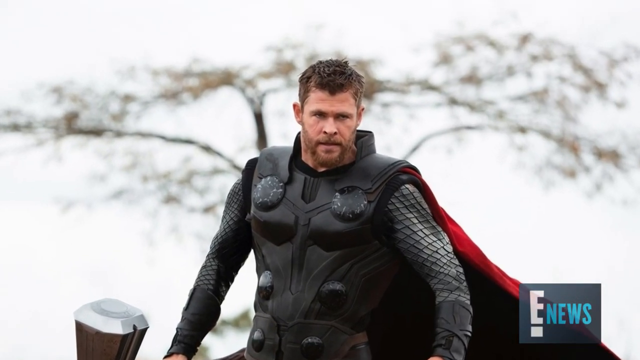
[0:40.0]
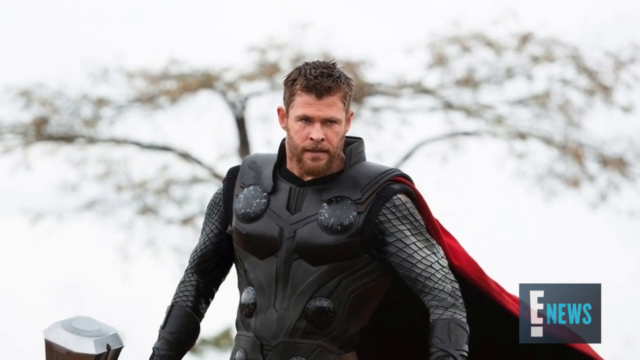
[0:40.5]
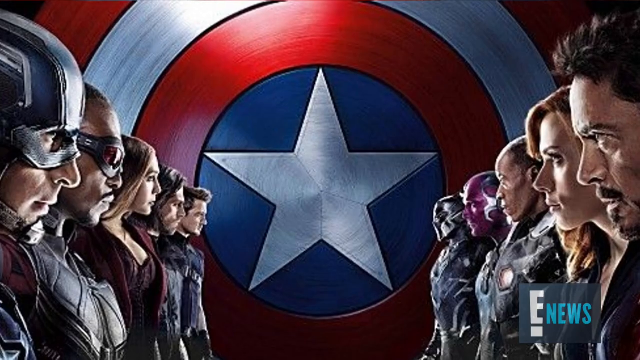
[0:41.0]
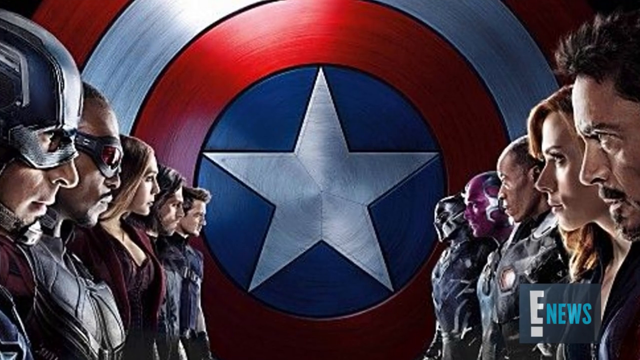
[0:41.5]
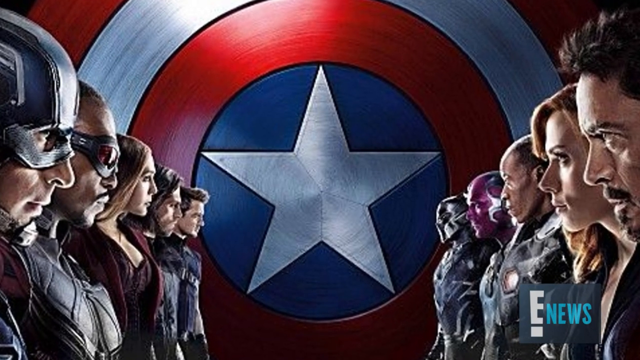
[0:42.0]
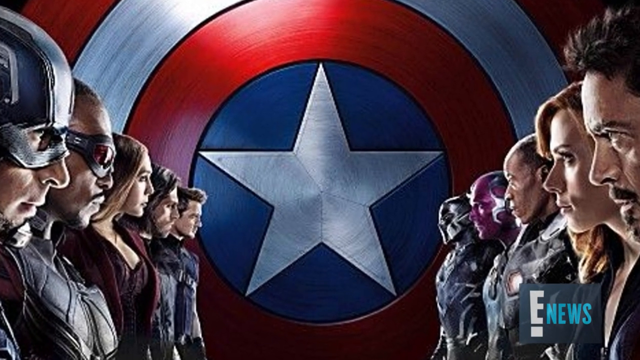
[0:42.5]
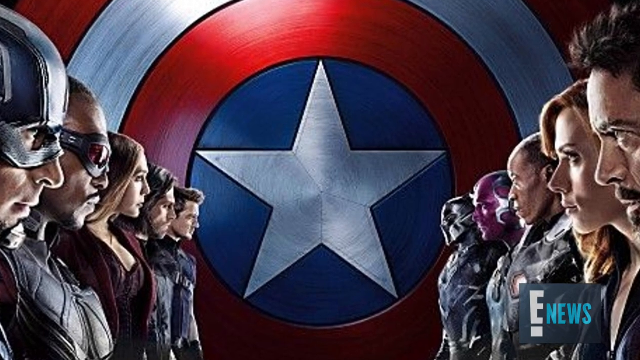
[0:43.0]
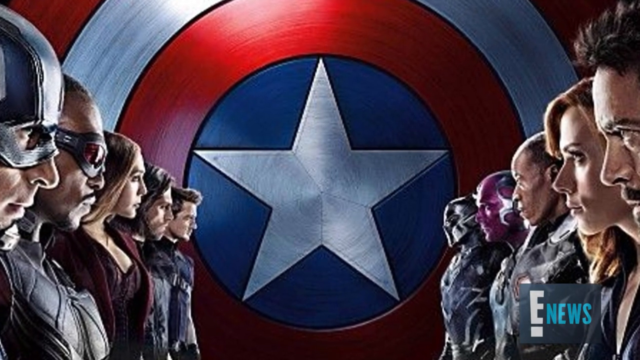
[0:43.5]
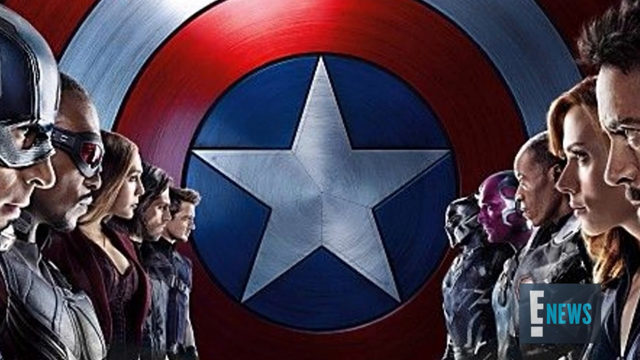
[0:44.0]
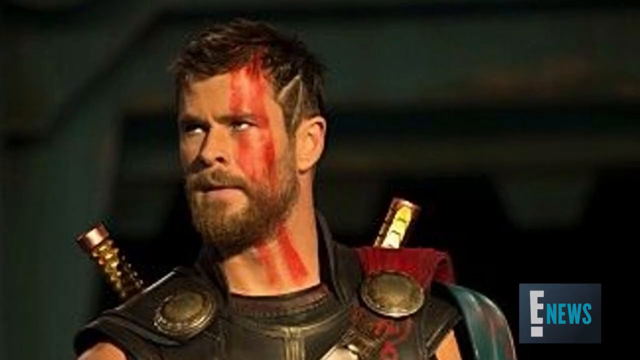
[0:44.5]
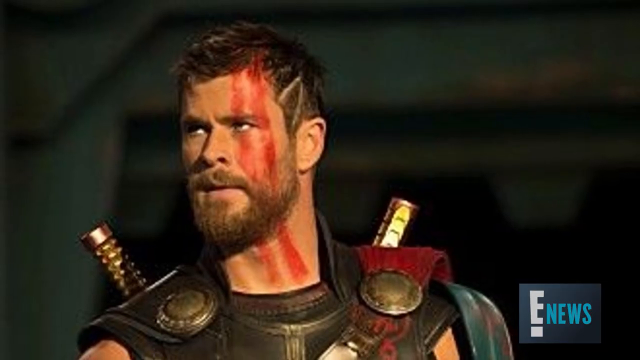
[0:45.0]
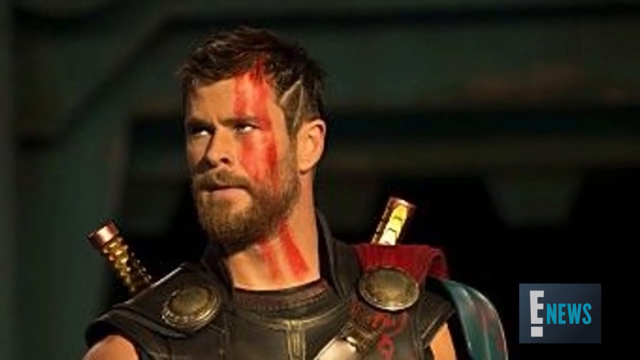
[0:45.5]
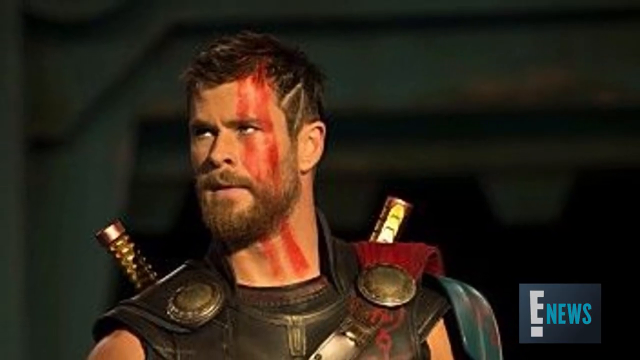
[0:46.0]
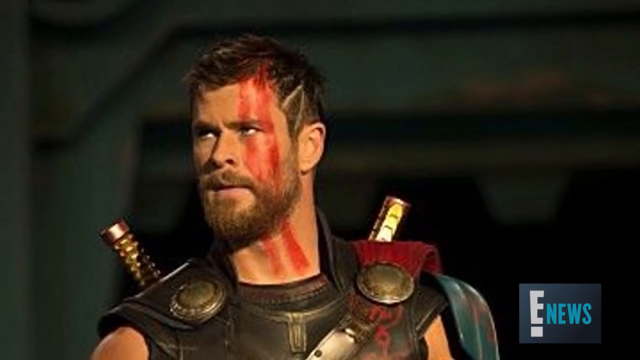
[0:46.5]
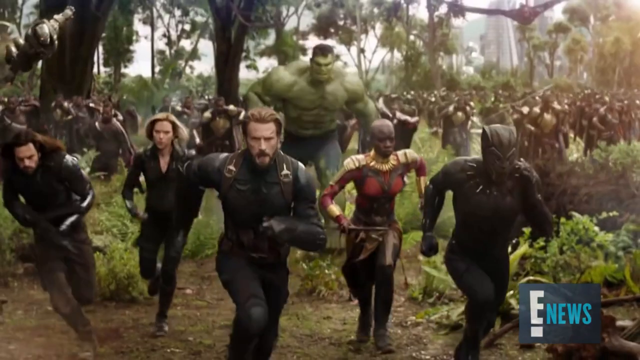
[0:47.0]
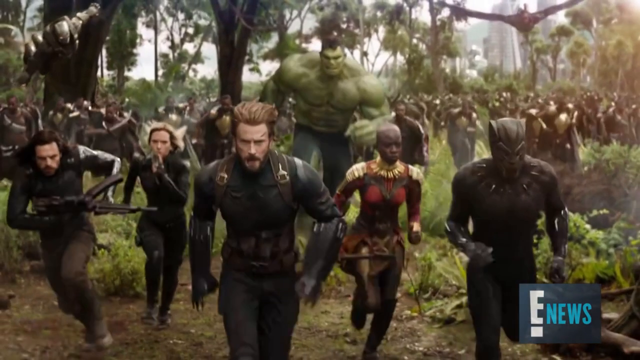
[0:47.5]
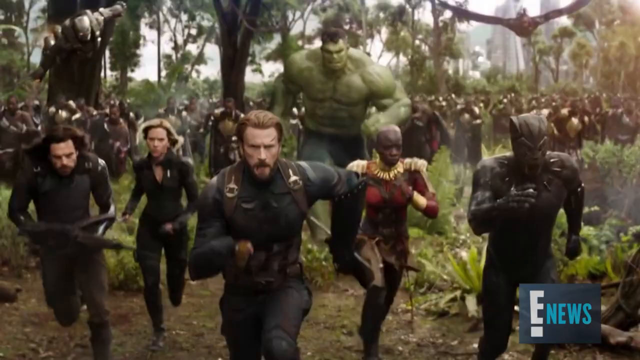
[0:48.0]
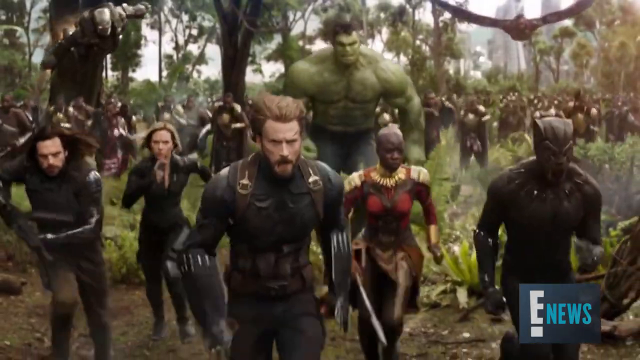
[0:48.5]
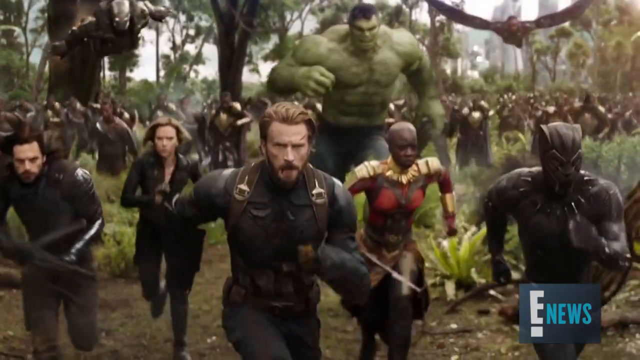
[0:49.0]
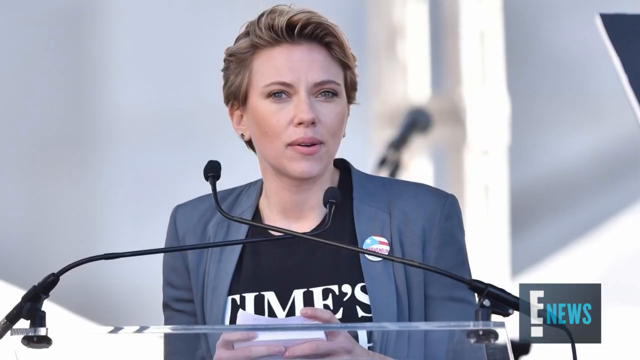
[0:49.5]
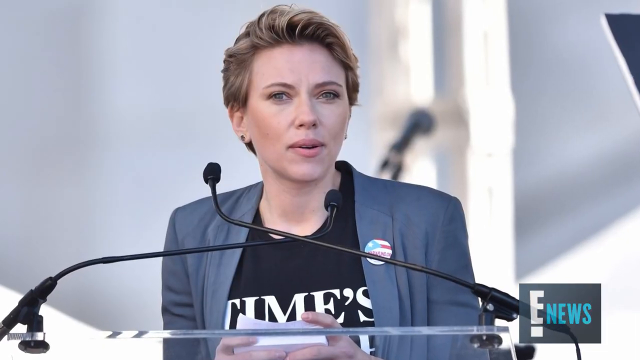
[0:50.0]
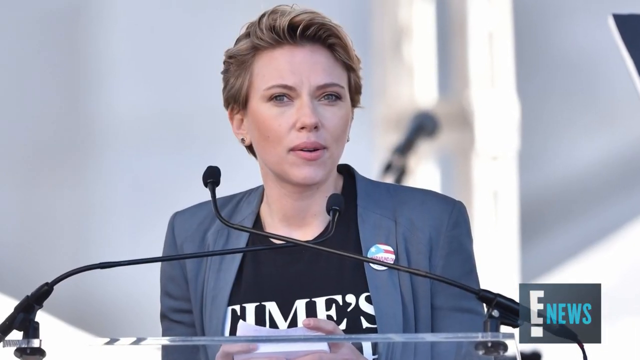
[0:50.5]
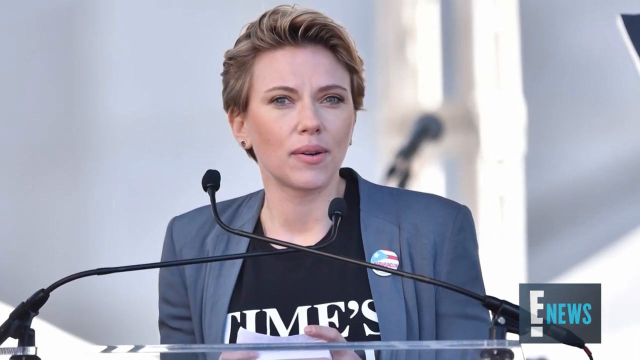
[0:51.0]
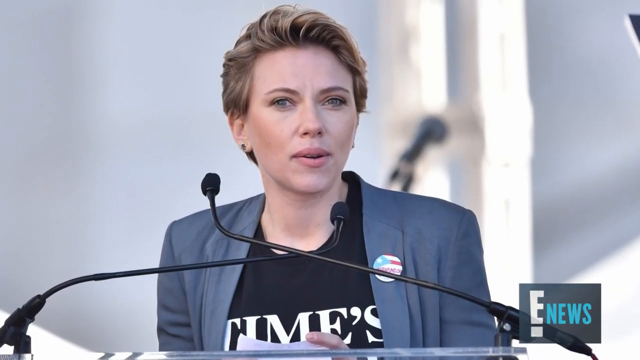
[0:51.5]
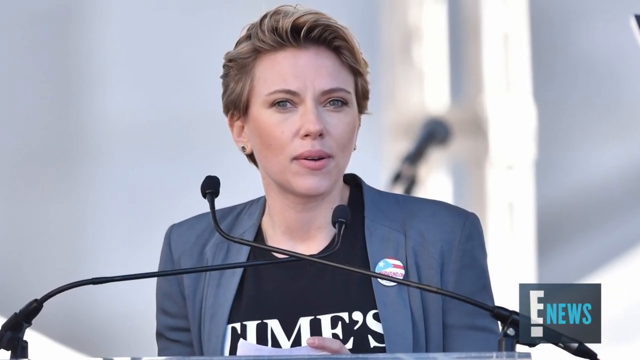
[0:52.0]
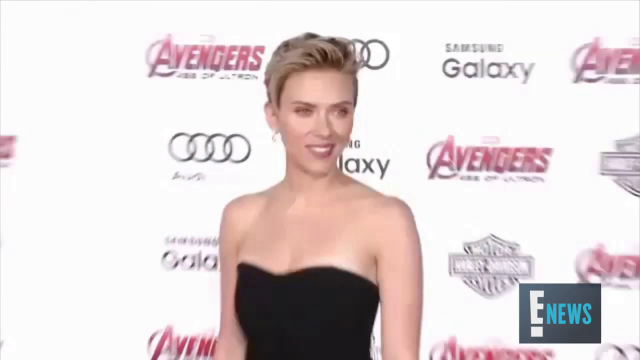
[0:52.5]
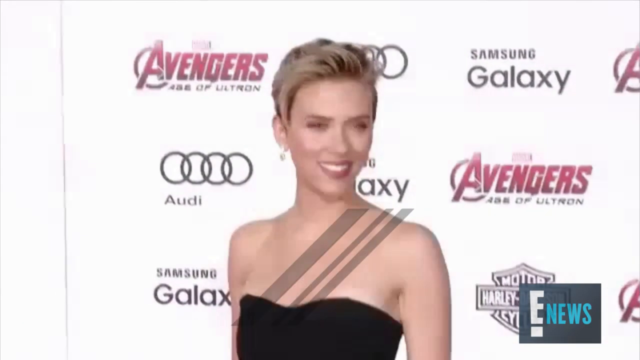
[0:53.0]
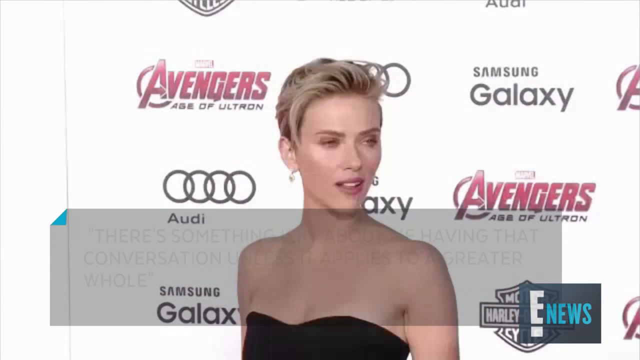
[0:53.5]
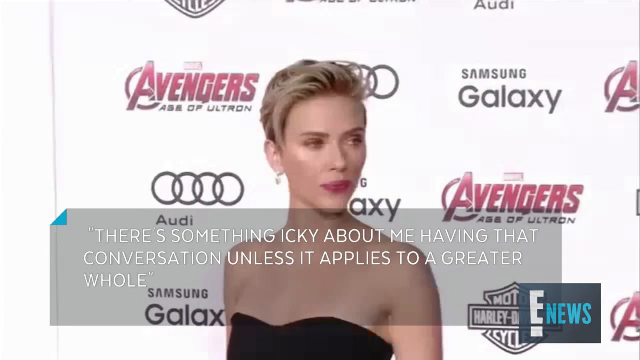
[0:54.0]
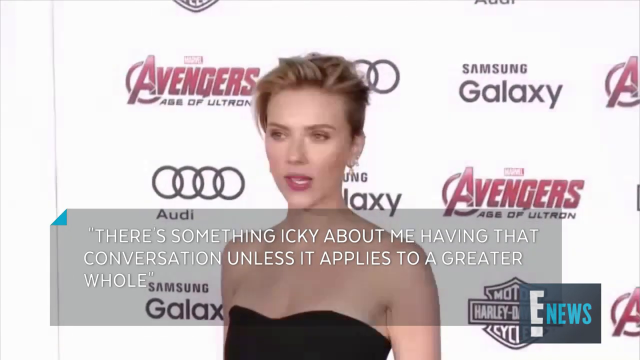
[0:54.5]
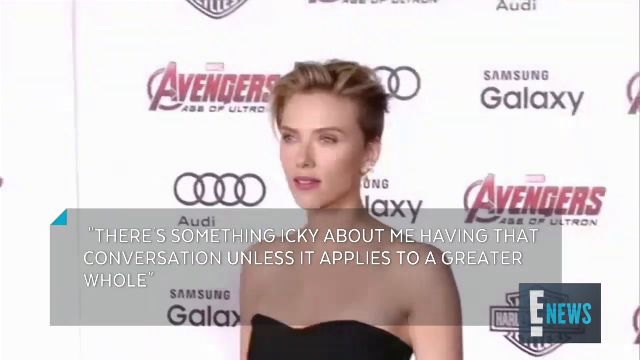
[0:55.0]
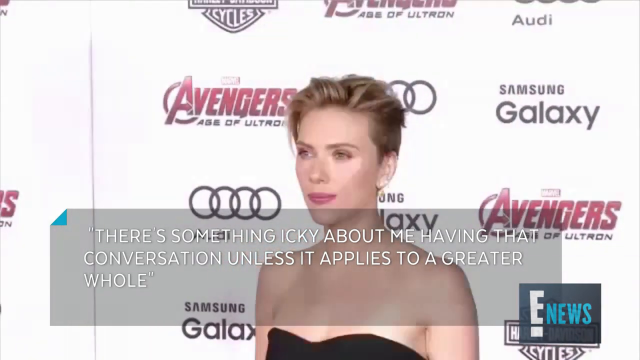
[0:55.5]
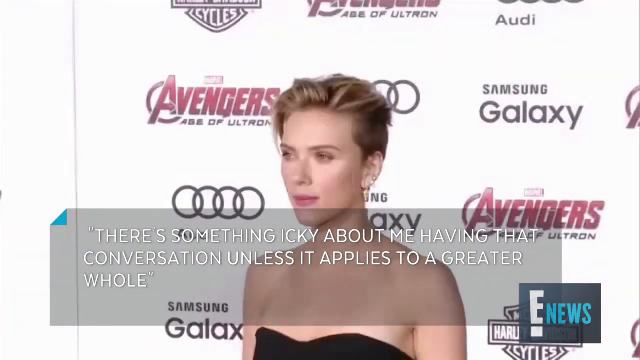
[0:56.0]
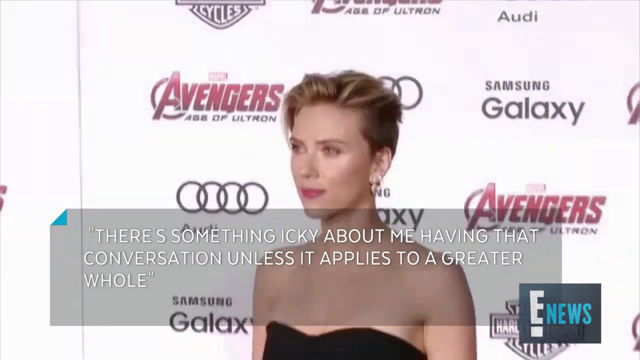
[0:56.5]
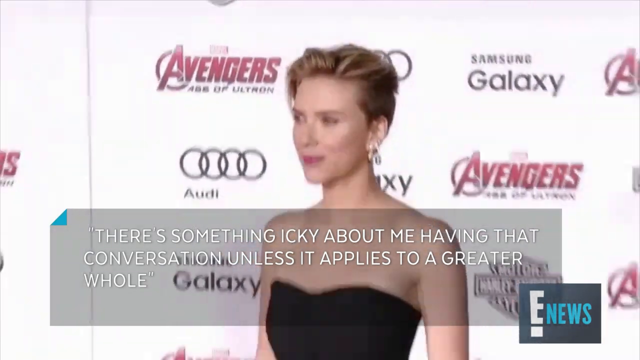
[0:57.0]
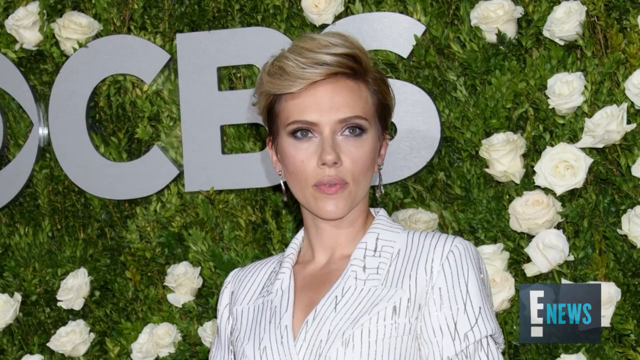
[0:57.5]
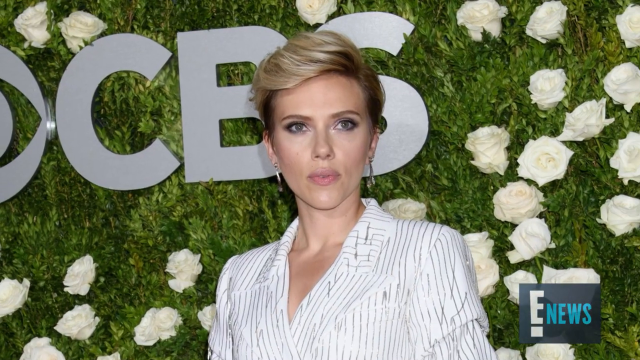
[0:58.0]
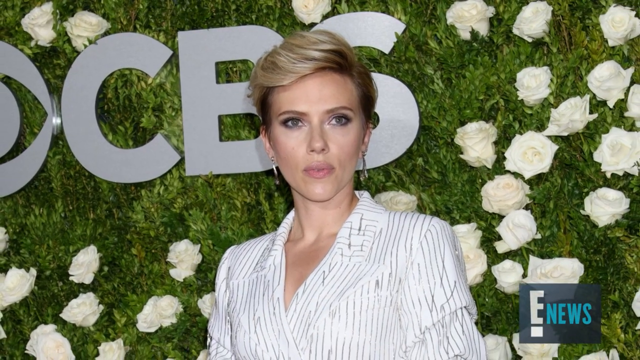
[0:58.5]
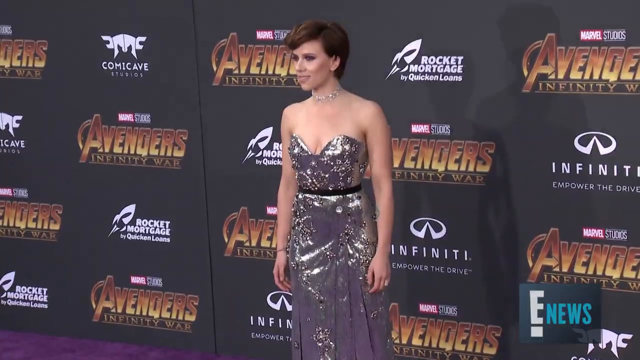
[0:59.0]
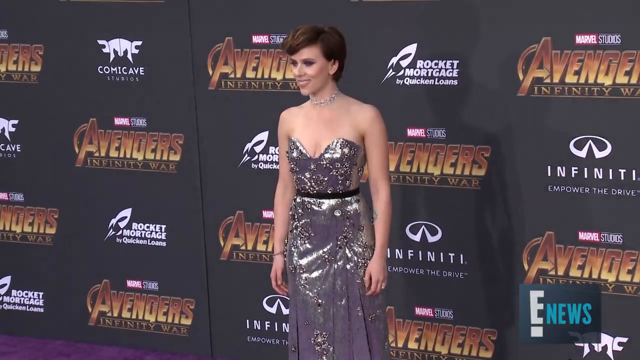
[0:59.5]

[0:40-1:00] In the image of Thor holding a hammer, he wears a scaled, long-sleeved shirt with a thick vest that gives it an armor appearance, and a red cape fluttering in the wind. The image changes to a lineup of superheroes on the left and on the right, with a shield behind them that has a star in the center on a blue background, surrounded by a red ring, then silver, then red. Eight people are visible; those on the left look to the right and those on the right look to the left, giving the appearance that they are all looking at one another. Another still shot of Thor follows: he has two red stripes running down his face and a long beard, and wears a uniform with a visible red cape, gold buttons, and two items extending behind his shoulders. A video then shows multiple superheroes running toward a camera in a forested scene. Scarlett Johansson is then seen with two microphones in front of her, wearing a grey blazer over a black t-shirt with a button on her left lapel, her short hair combed back. The image changes to a video of Scarlett Johansson with blonde hair combed back, wearing a black dress, with an Avengers Age of Ultron logo, a Samsung Galaxy logo and an Audi logo in the background. A text box appears reading "There is something icky about me having that conversation, unless it applies to a greater whole." The image then changes to a still shot of Scarlett Johansson with a green background and white flowers visible.